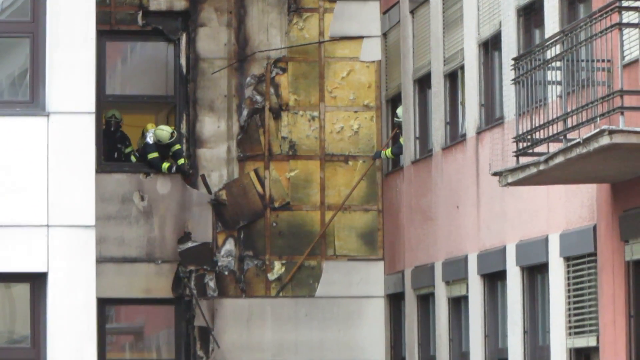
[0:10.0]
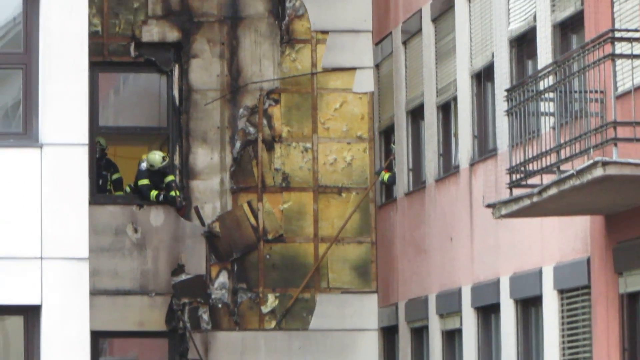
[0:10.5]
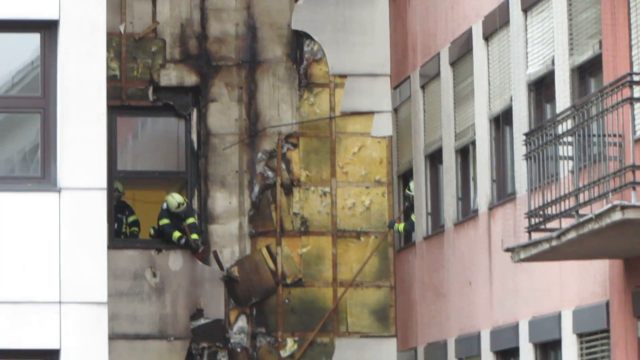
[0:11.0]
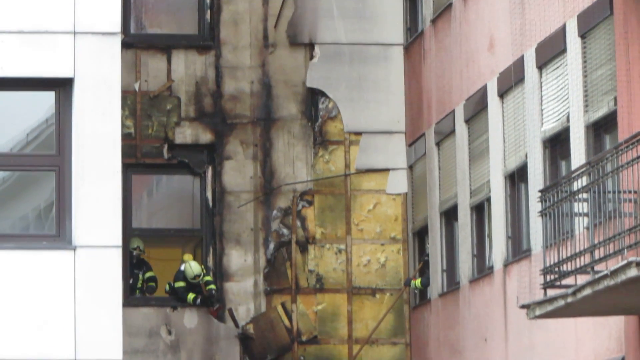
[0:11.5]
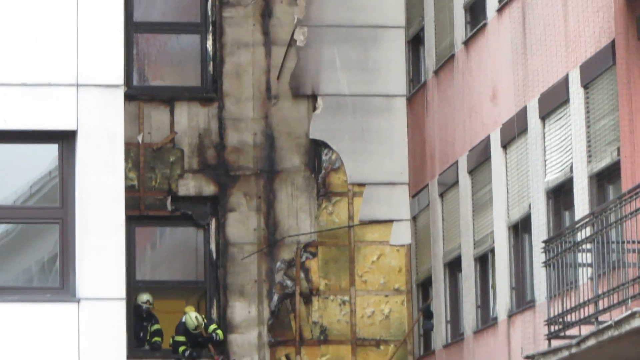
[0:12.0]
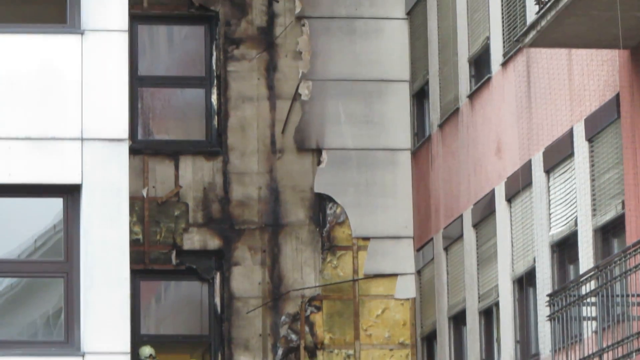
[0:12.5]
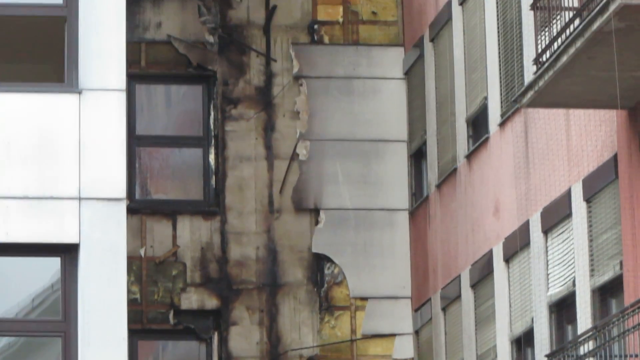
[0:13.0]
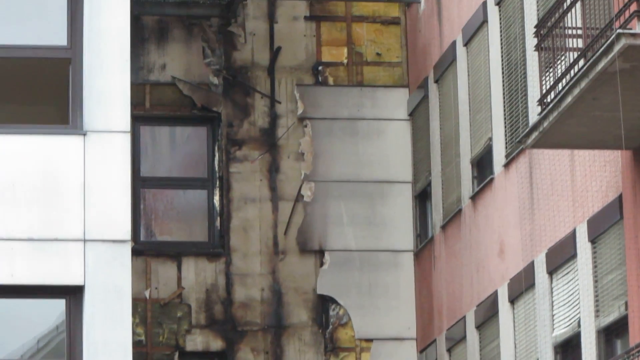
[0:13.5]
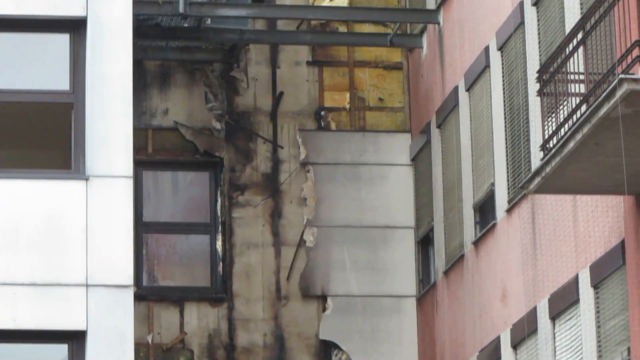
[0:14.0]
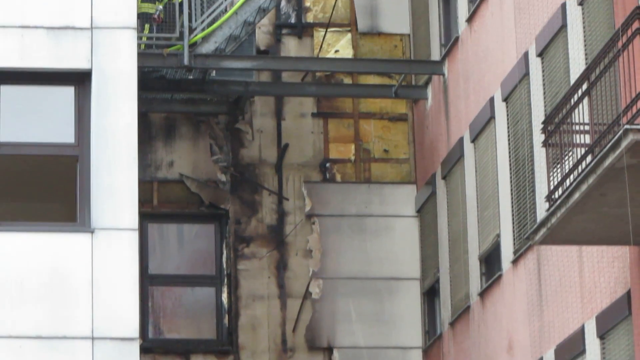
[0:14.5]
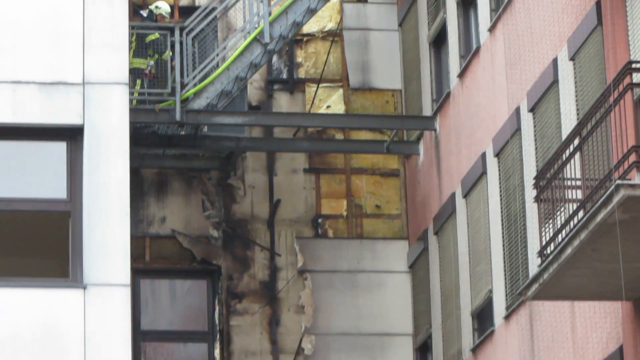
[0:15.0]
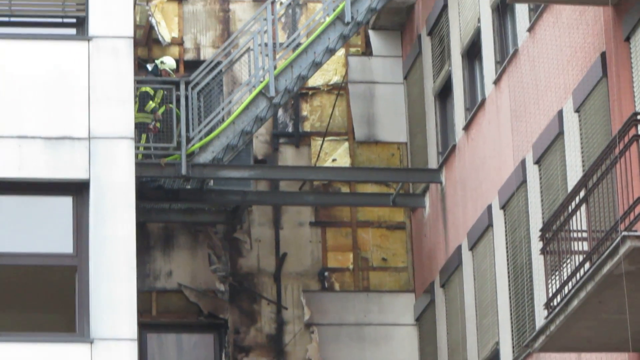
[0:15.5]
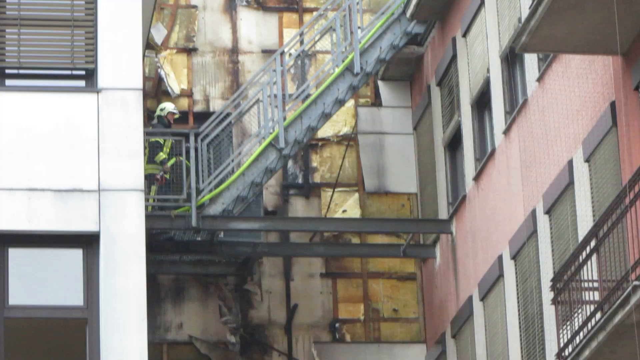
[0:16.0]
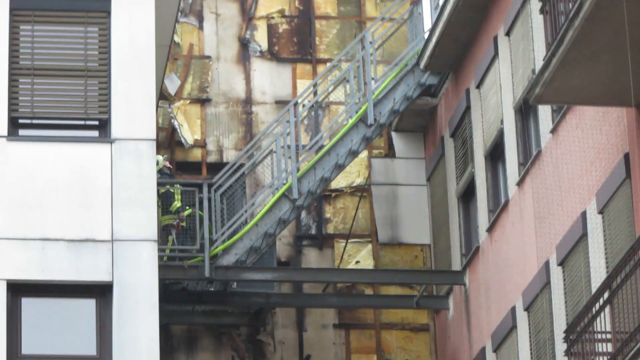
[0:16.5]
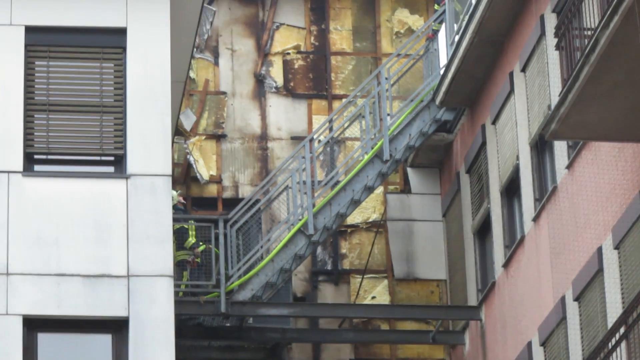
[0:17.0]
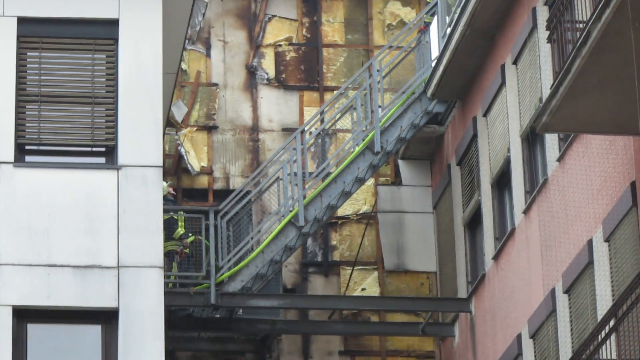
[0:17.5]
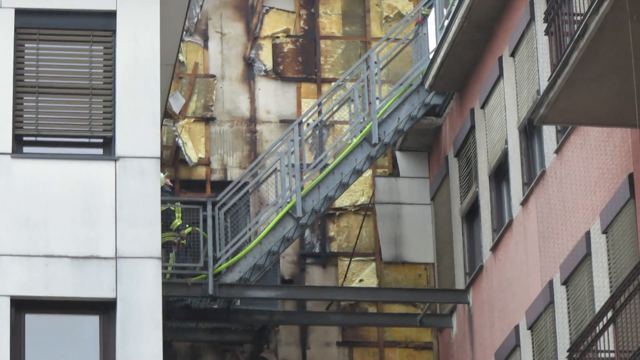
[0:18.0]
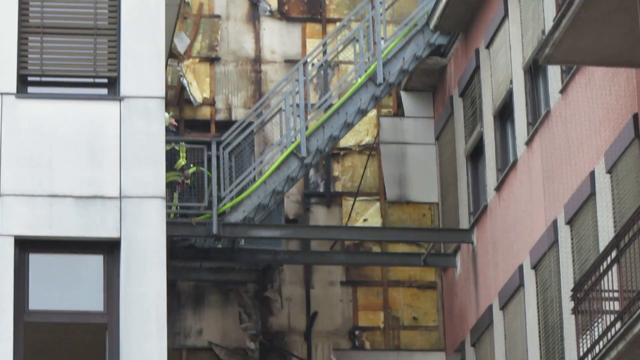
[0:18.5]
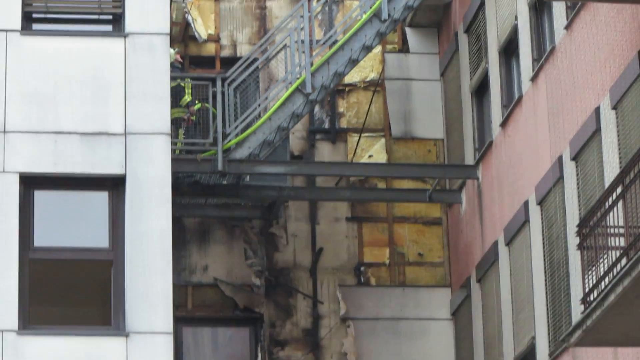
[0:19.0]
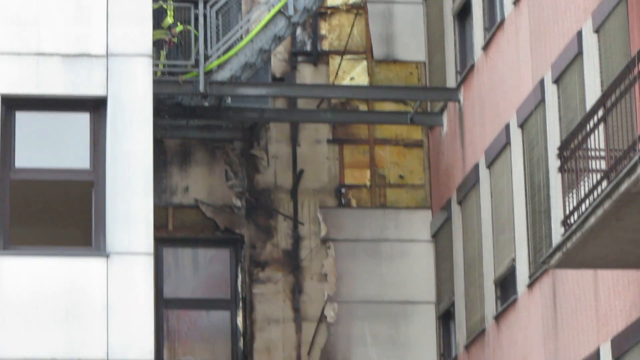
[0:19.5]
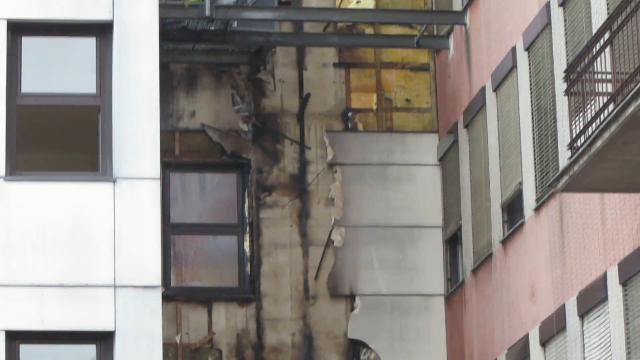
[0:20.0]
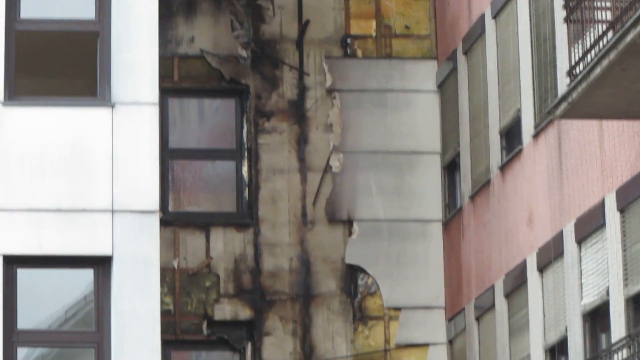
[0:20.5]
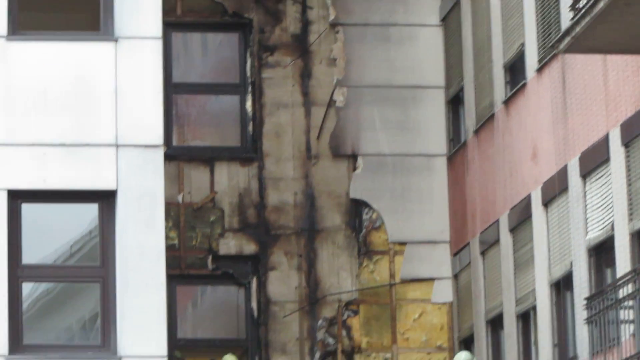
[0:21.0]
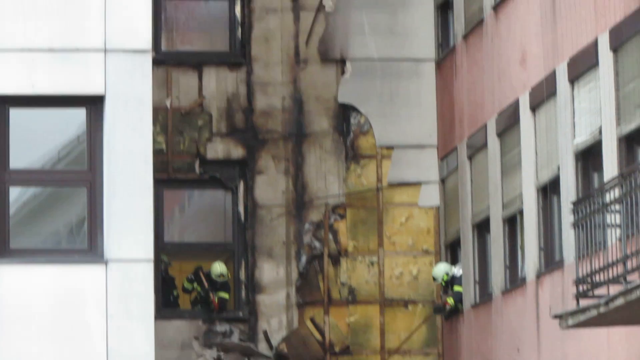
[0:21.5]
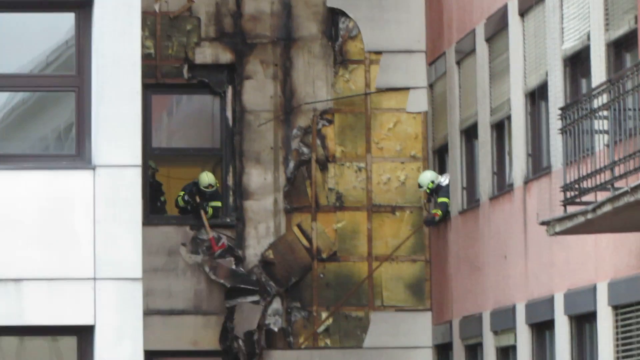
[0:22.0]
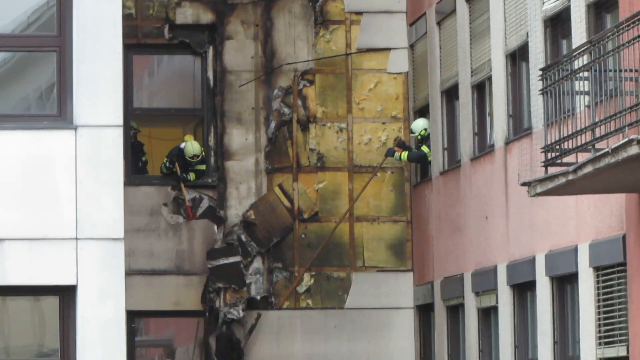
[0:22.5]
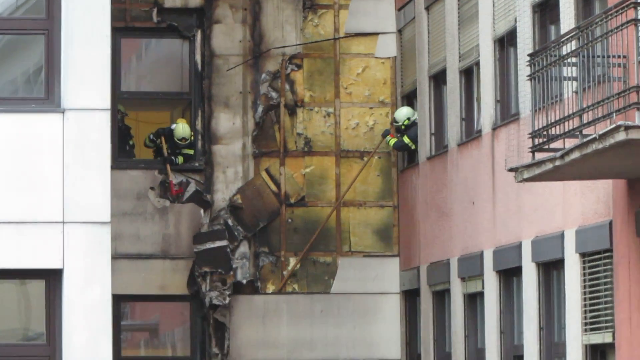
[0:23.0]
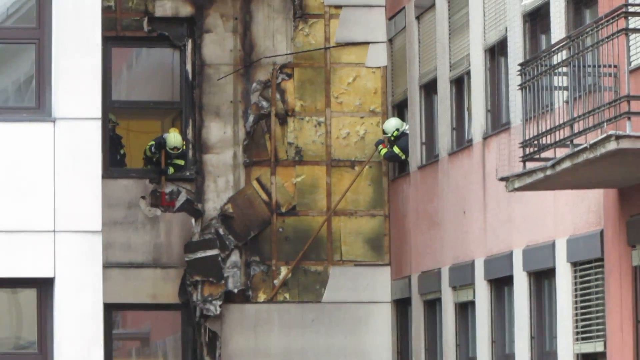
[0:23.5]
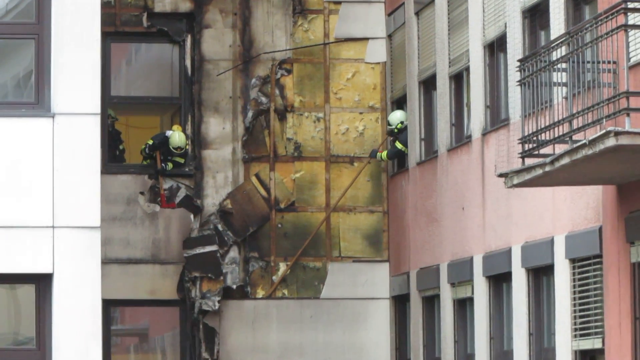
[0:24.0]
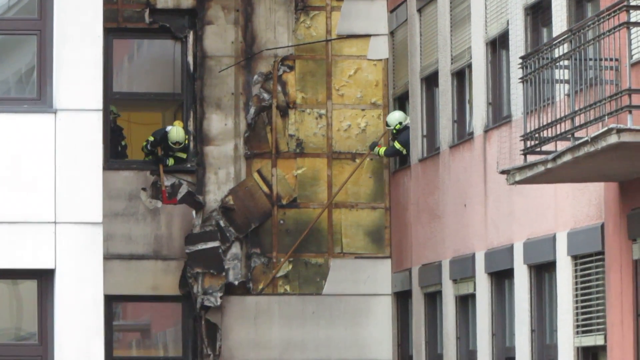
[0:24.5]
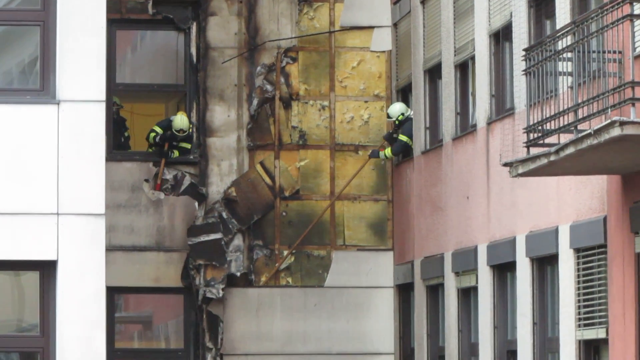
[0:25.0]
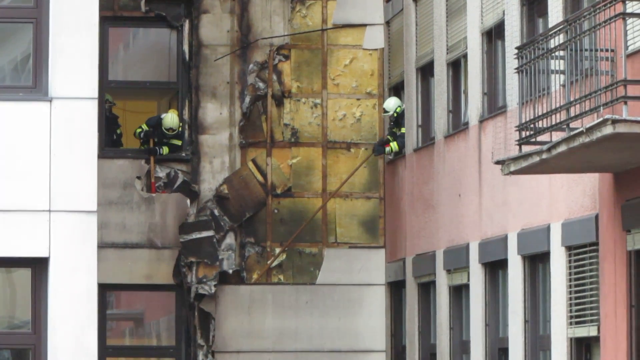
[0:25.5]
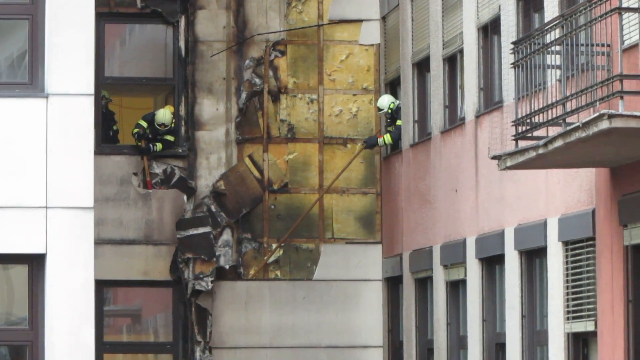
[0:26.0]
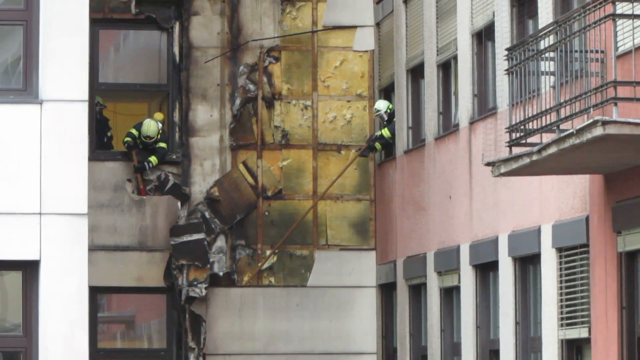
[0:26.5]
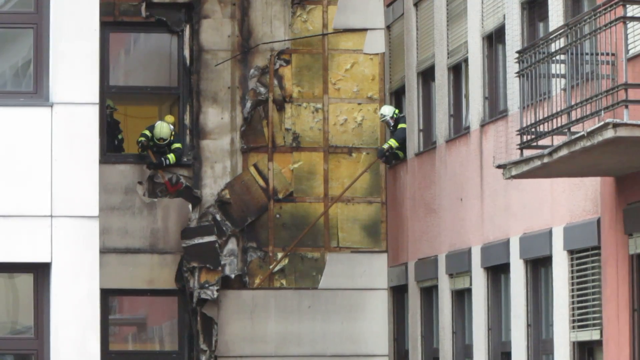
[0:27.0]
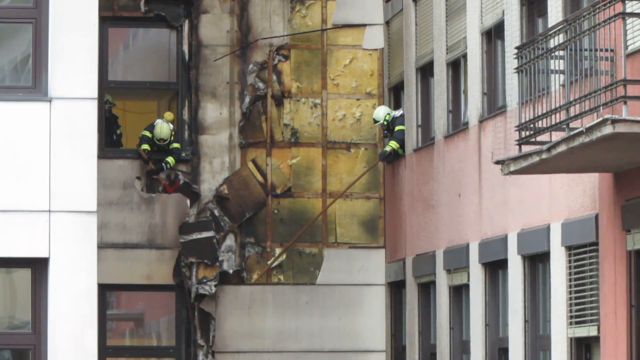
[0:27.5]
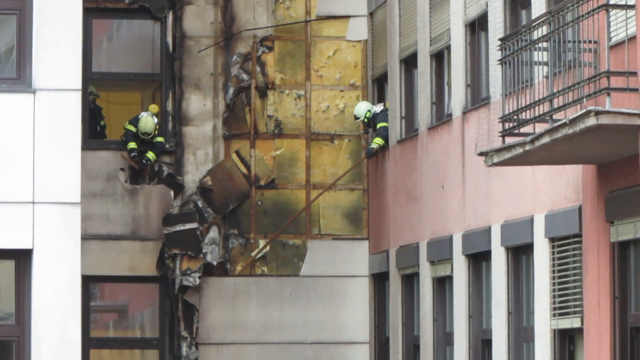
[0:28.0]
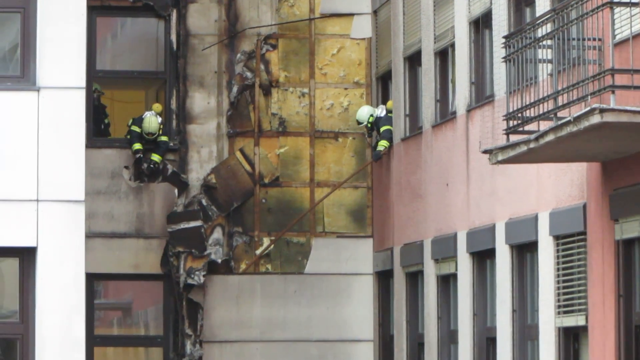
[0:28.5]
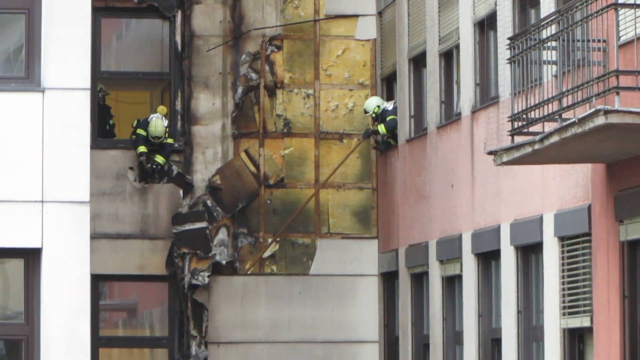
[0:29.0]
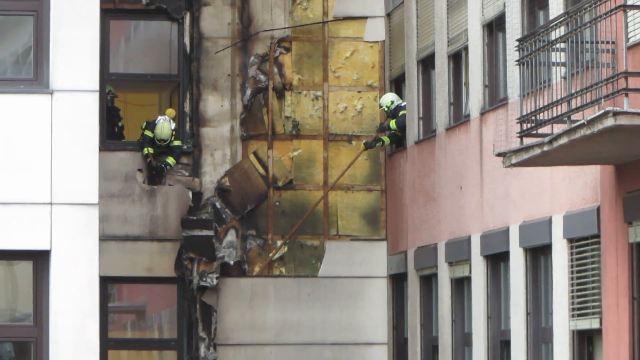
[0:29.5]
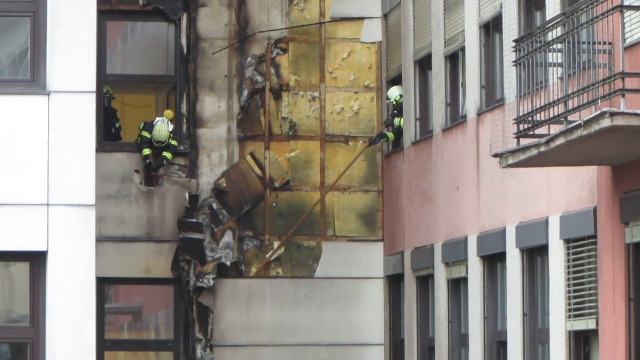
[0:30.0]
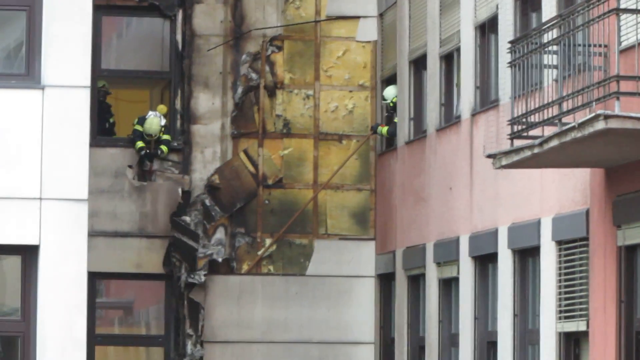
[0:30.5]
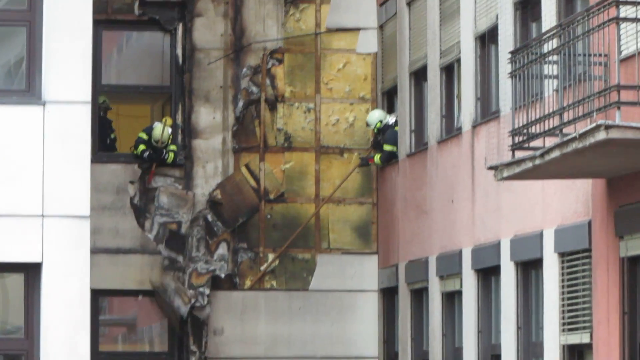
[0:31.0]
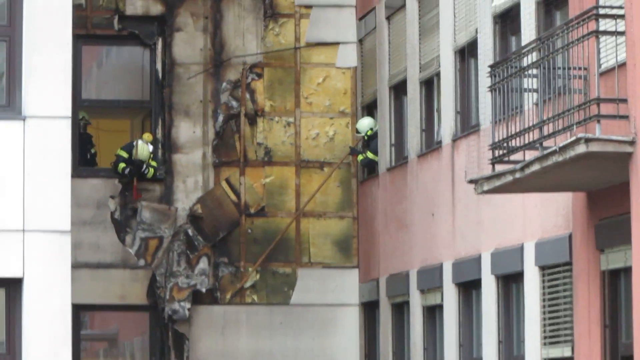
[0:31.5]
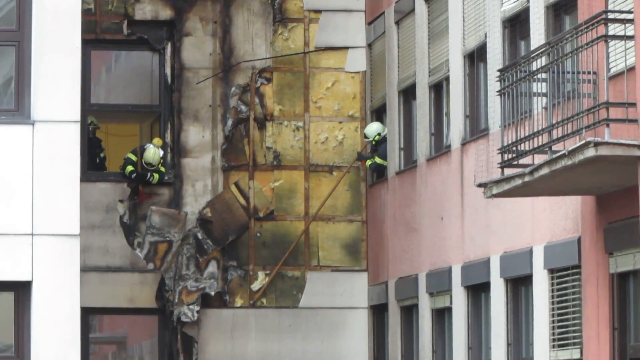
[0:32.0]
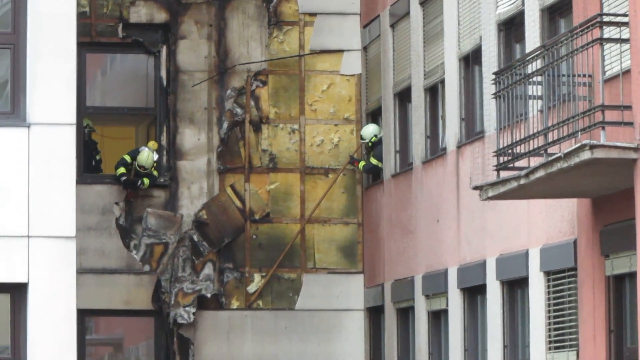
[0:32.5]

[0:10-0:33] The camera is zoomed in on the section of the white building that touches the pink building, which looks burnt out by fire. A firefighter hangs out a window of the pink building. The firefighters wear helmets and typical firefighter gear with yellow reflective bands on their uniforms. The firefighter on the right holds a very long pole and pries off pieces of the building that look fire-damaged, and so does another firefighter in the white building. The camera moves up to show a fireman standing on an outdoor stairwell, then moves back down to the firemen in the white and pink windows tearing off pieces of the building. The fireman in the white building uses an axe, while the fireman hanging out of the pink building holds a very long piece of metal like a pole, apparently at least 10 feet long. It looks like the aftermath of a fire after the firemen have put it out, with cleanup underway. The footage is not steady, possibly shot on a phone as amateur video.